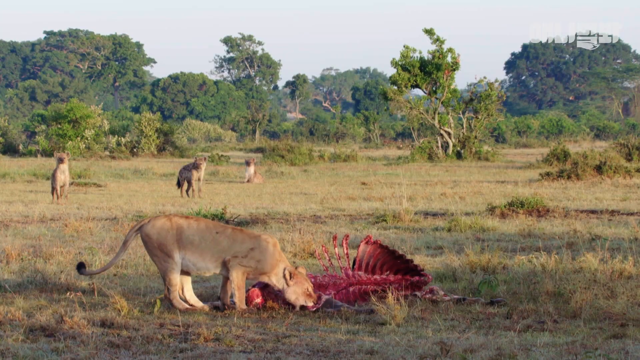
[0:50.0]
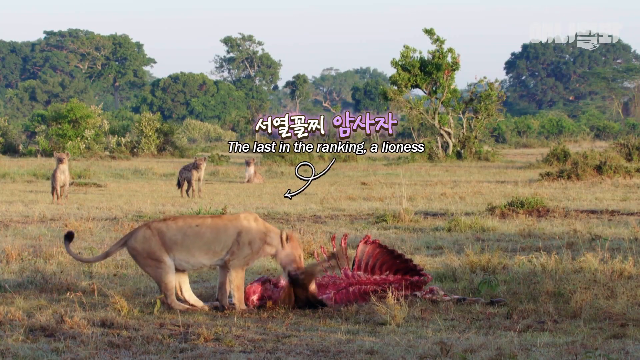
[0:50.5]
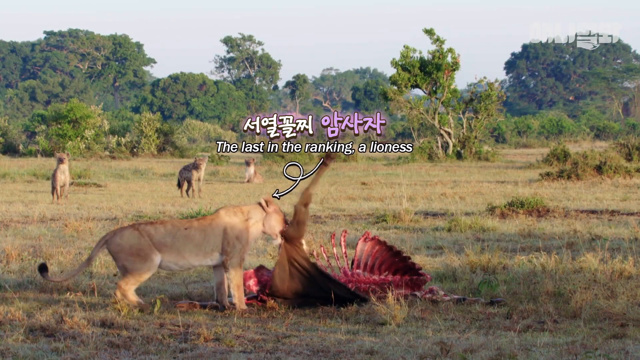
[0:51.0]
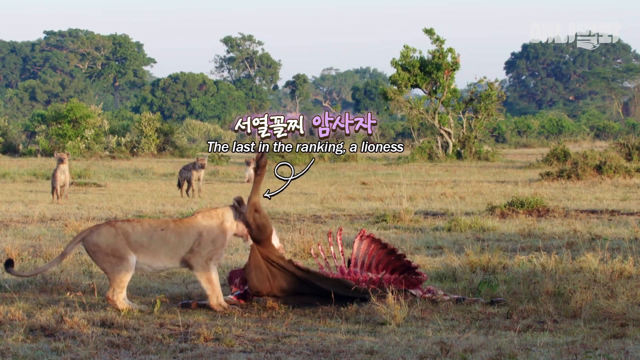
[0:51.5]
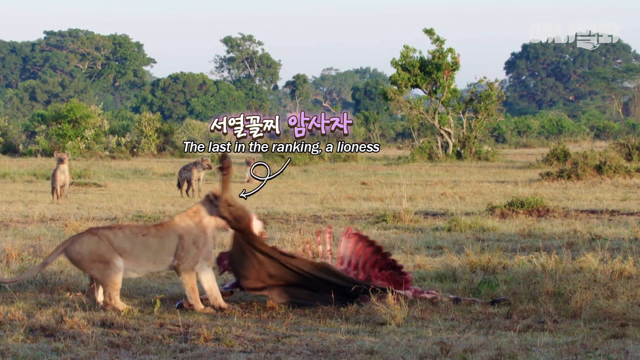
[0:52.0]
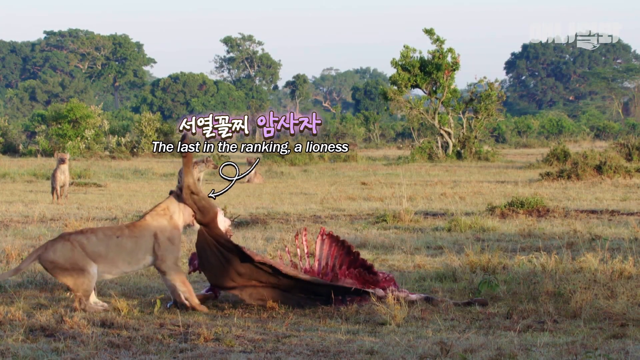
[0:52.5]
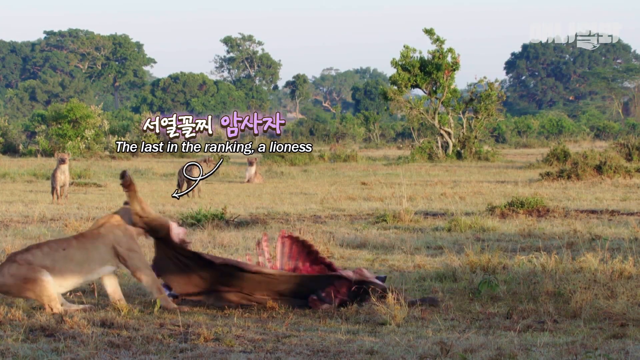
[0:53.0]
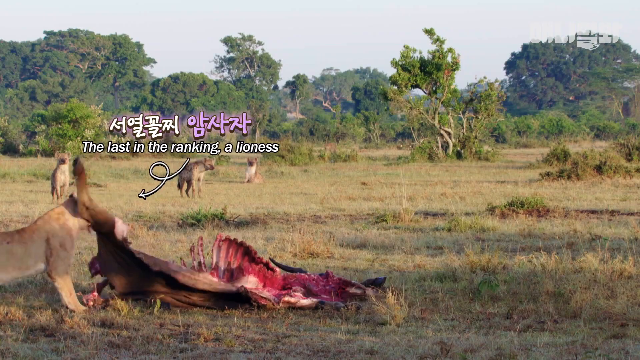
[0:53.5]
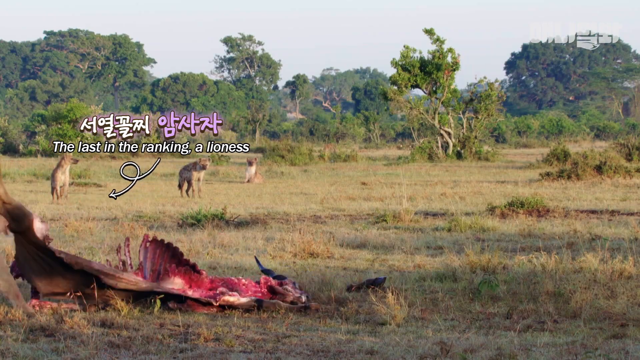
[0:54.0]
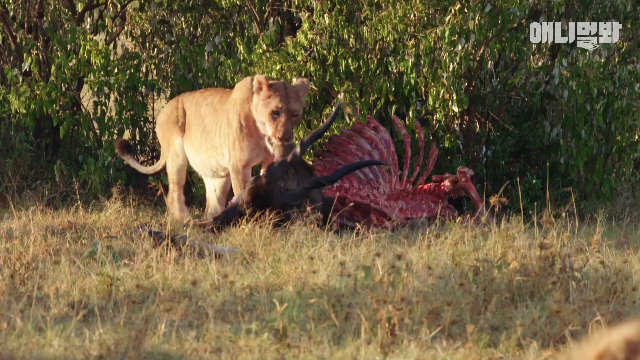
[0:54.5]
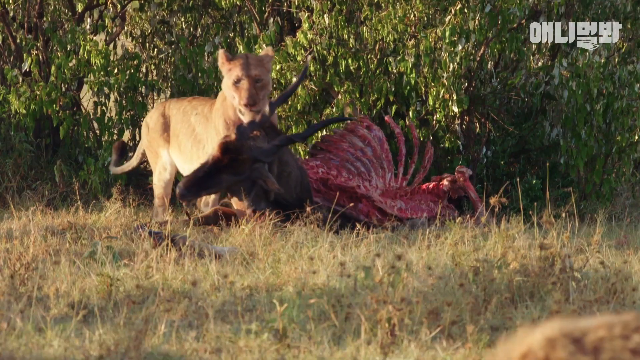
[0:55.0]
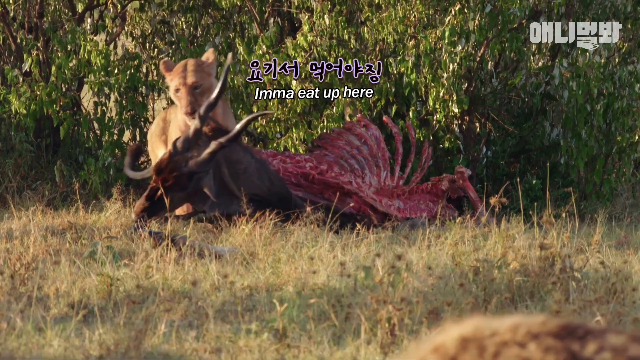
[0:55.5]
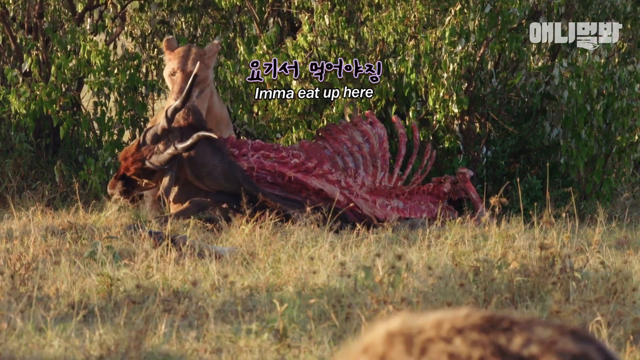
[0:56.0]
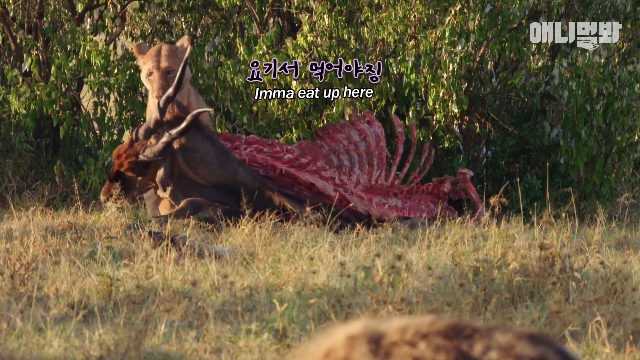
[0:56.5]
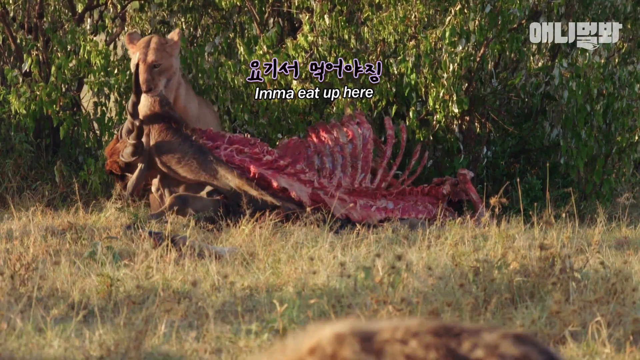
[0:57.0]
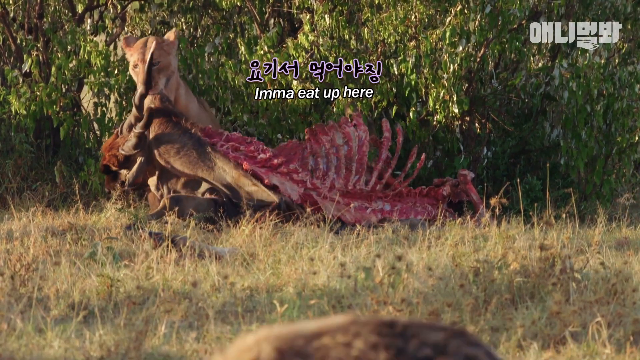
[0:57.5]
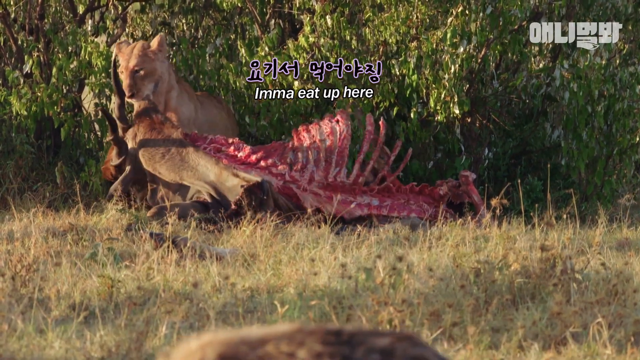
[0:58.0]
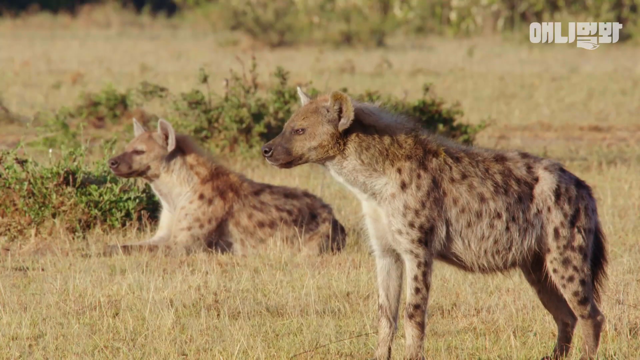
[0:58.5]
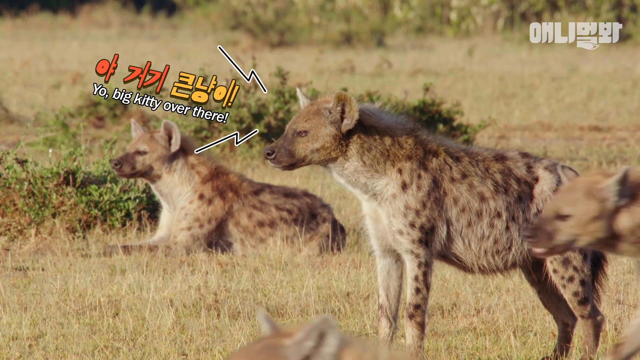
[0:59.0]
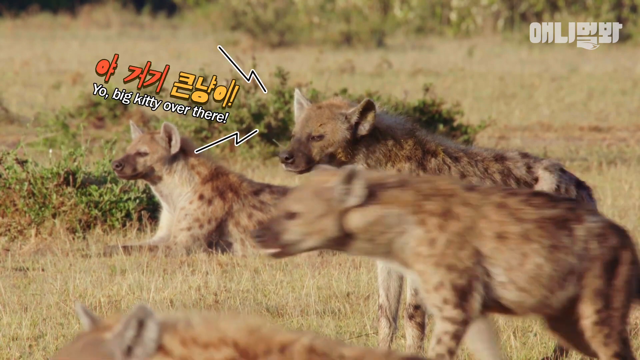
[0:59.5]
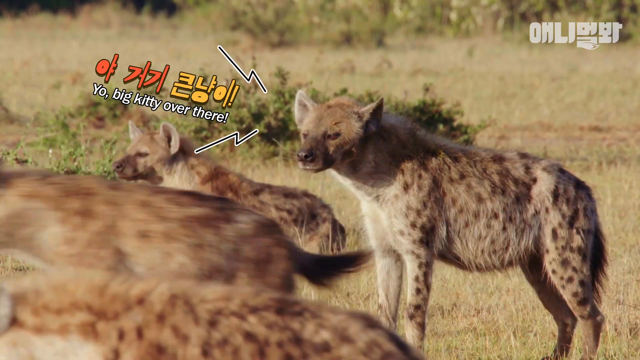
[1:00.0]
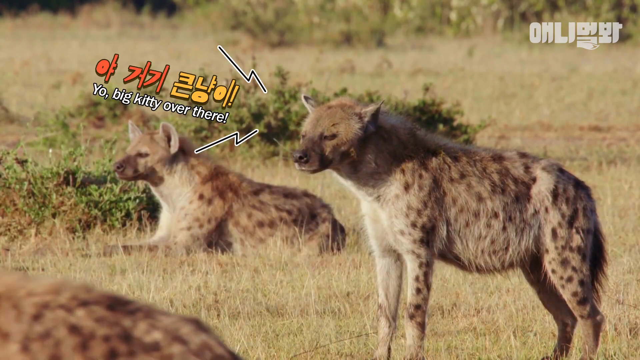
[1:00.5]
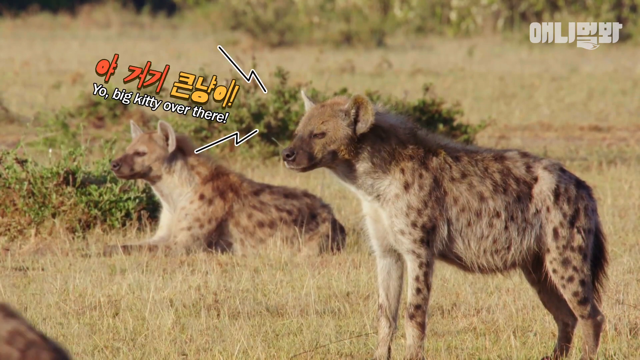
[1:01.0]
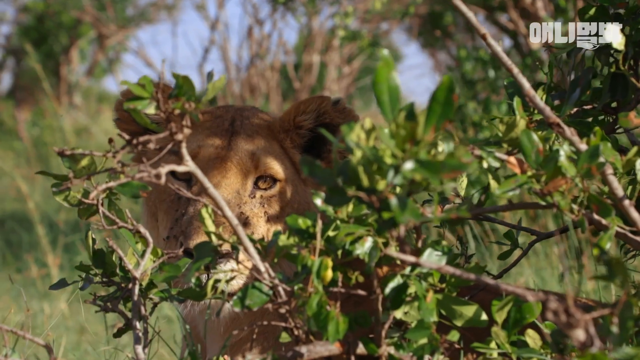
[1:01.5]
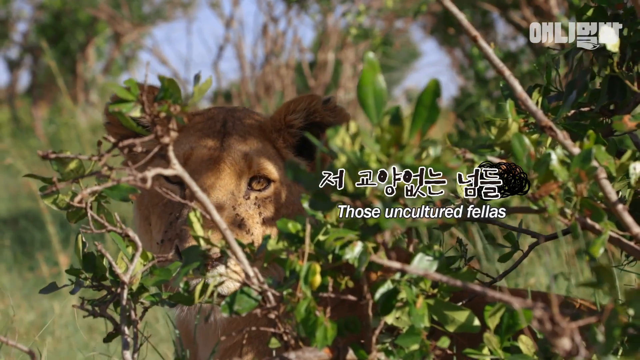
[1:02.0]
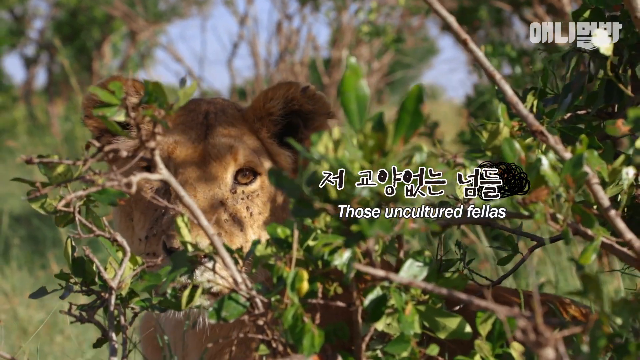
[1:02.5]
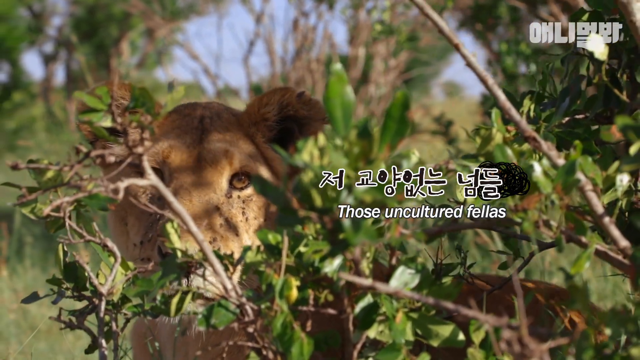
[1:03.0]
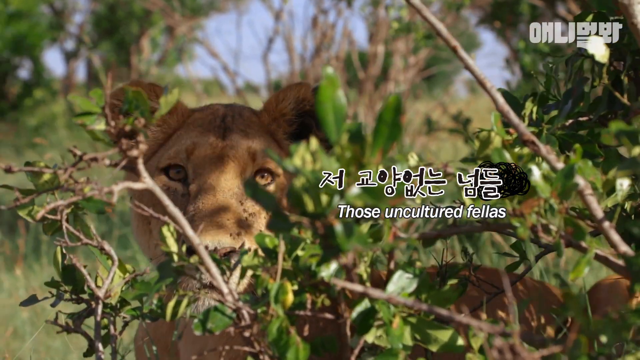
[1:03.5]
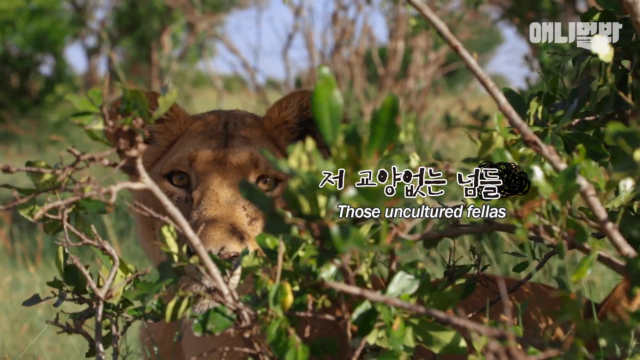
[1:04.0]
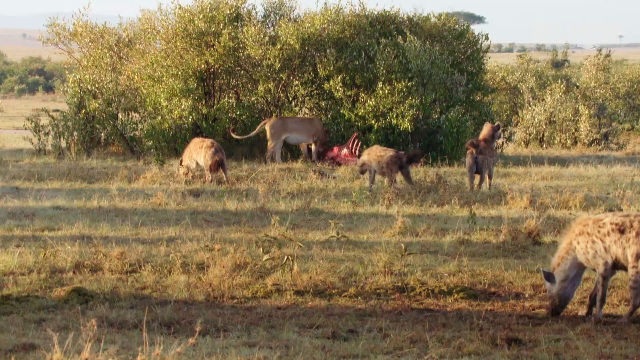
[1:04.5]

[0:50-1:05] A lioness without a mane drags the carcass of its prey into a bush in the savanna, while the hyenas observe and chastise or harass her. A cub appears to be eavesdropping from behind cover while the hyenas go out into the open to confront the lioness, who has dragged the carcass into the shade of the bush. The setting is the same, and the captions provide a detailed story about what is happening.